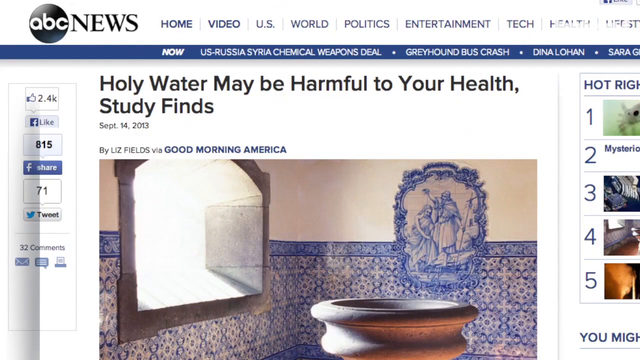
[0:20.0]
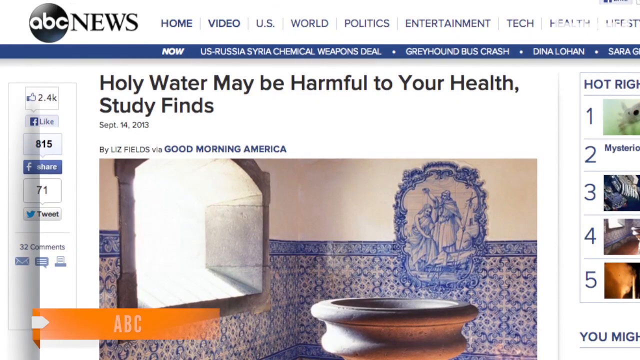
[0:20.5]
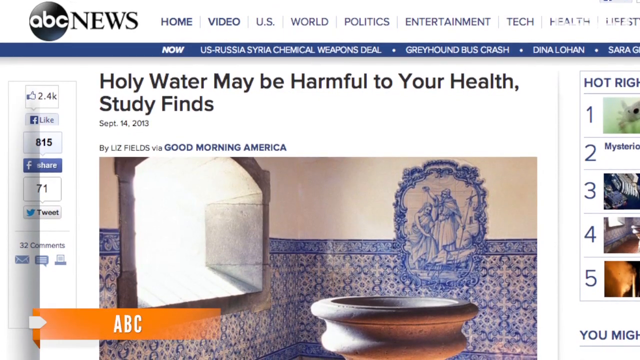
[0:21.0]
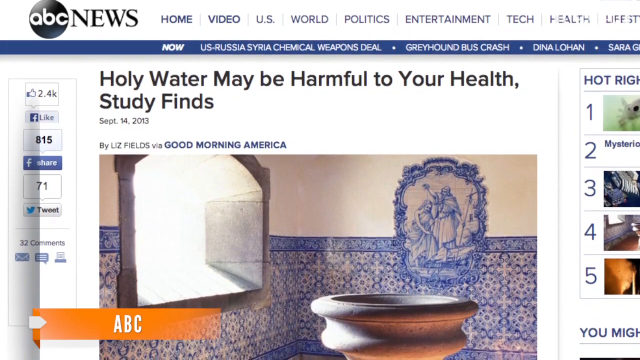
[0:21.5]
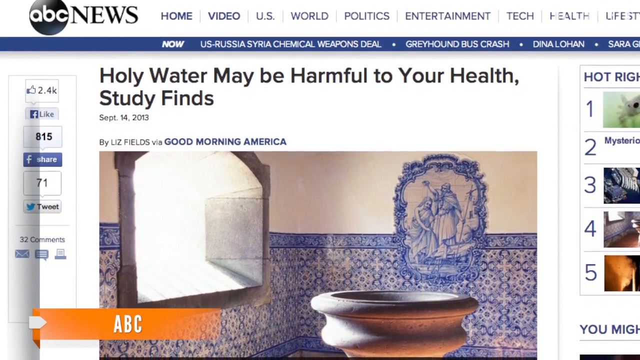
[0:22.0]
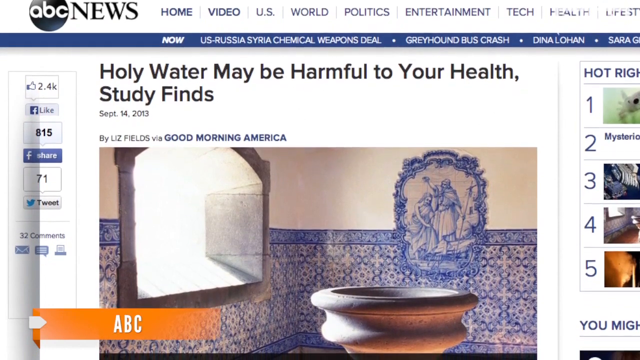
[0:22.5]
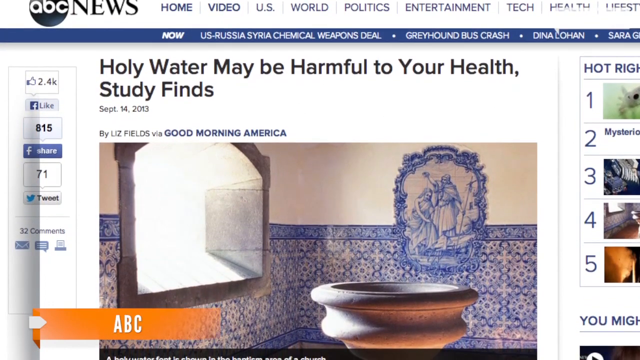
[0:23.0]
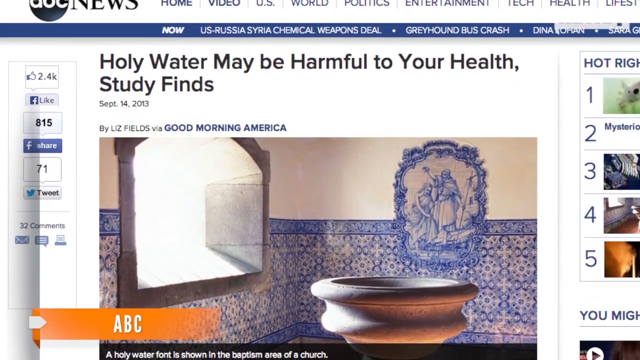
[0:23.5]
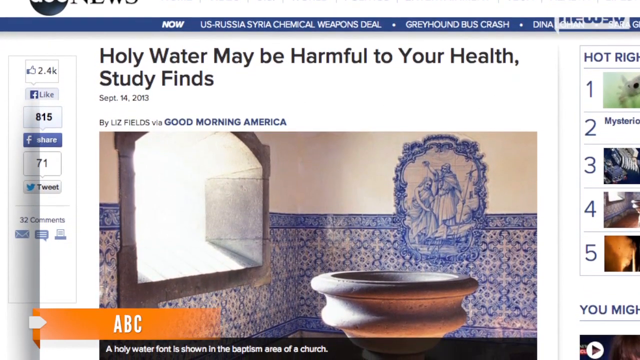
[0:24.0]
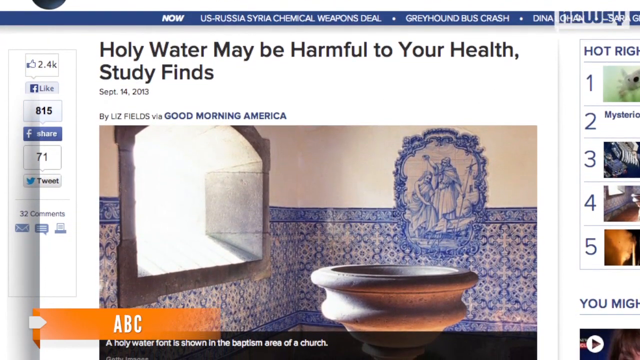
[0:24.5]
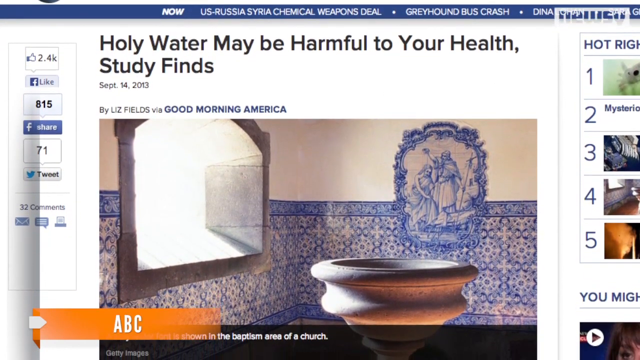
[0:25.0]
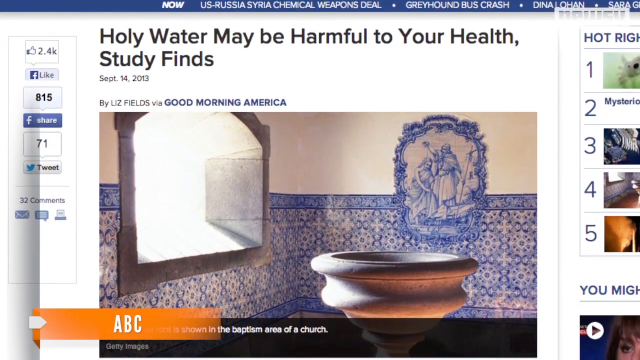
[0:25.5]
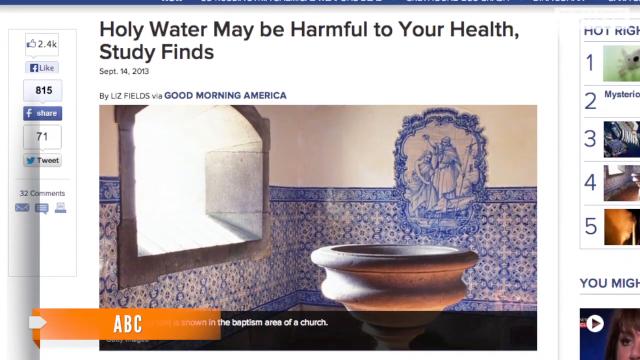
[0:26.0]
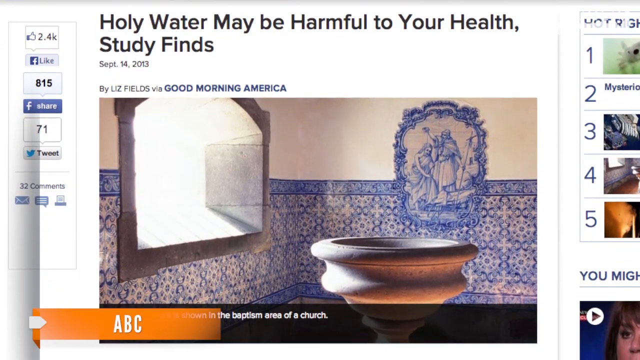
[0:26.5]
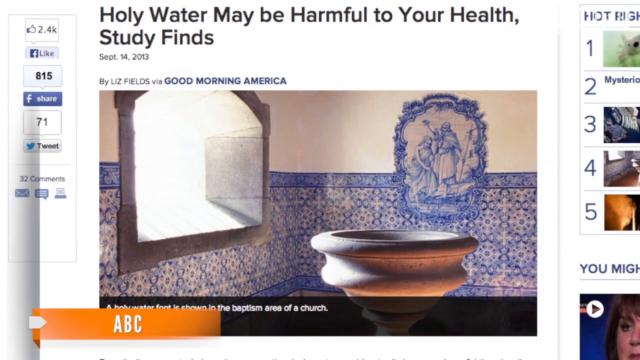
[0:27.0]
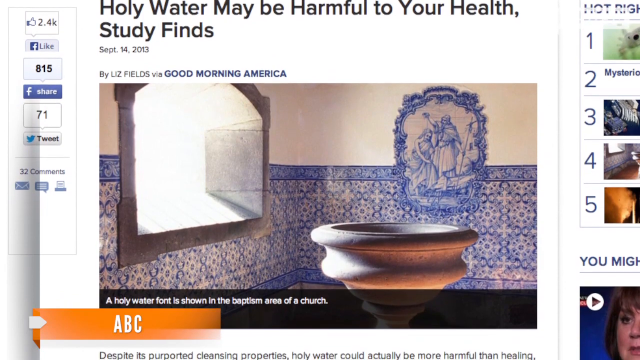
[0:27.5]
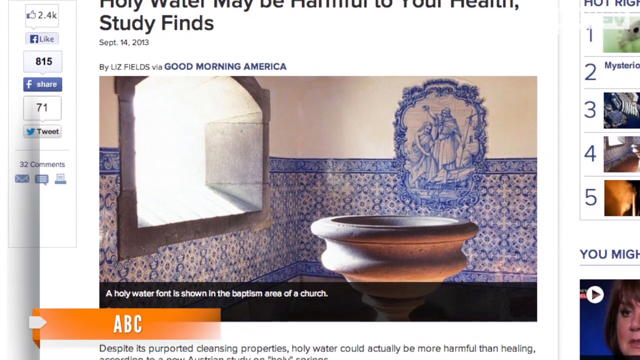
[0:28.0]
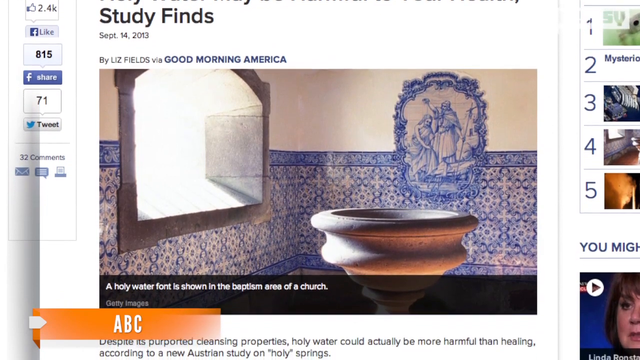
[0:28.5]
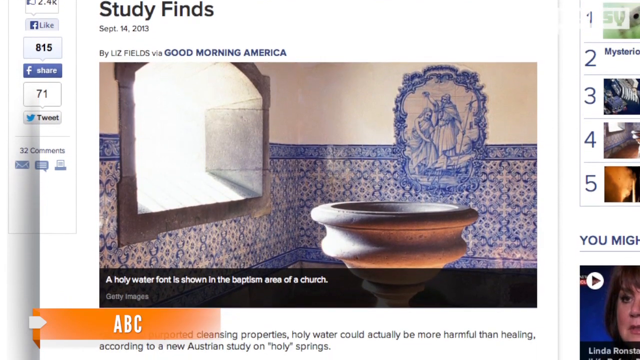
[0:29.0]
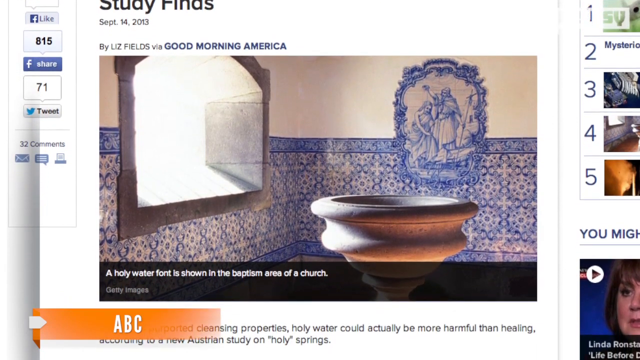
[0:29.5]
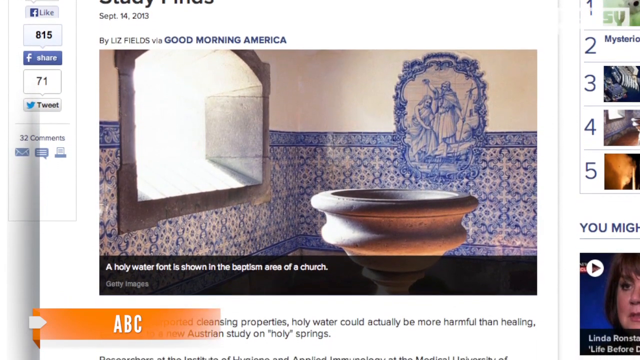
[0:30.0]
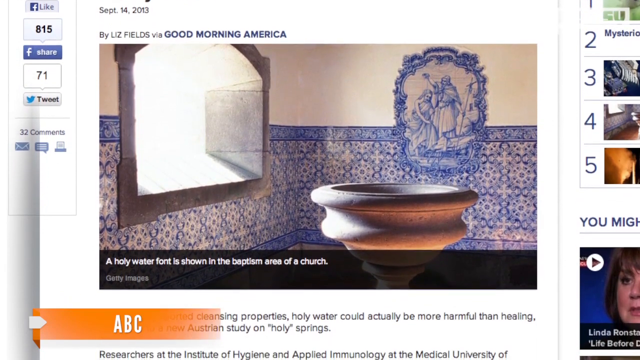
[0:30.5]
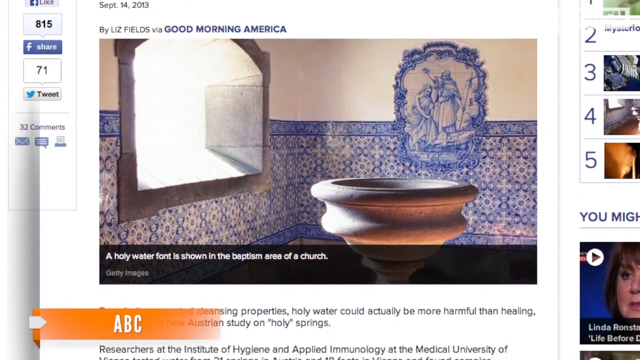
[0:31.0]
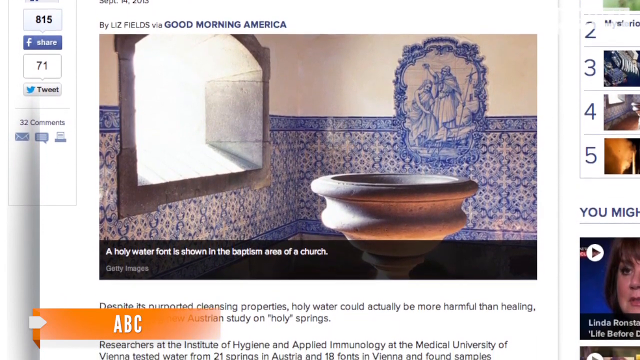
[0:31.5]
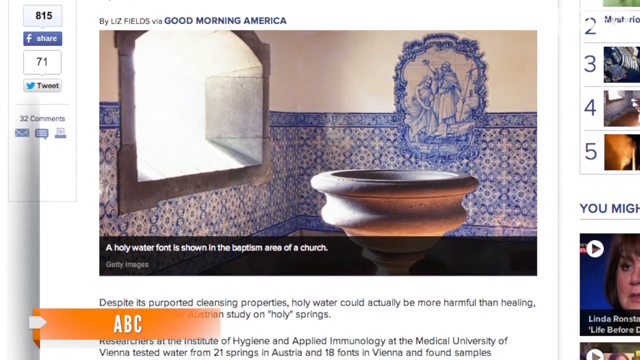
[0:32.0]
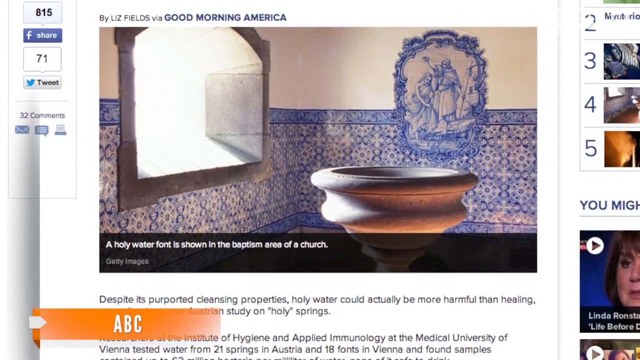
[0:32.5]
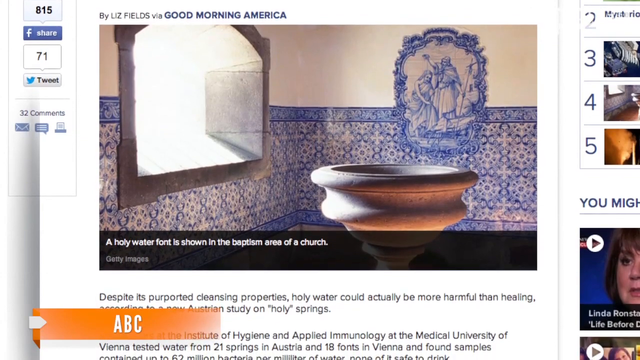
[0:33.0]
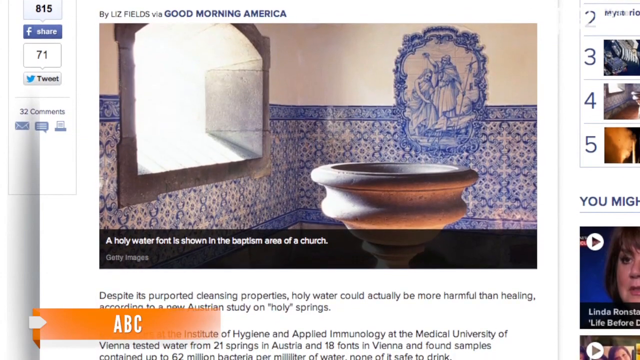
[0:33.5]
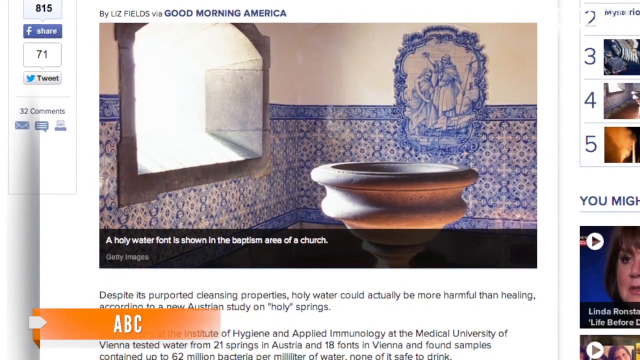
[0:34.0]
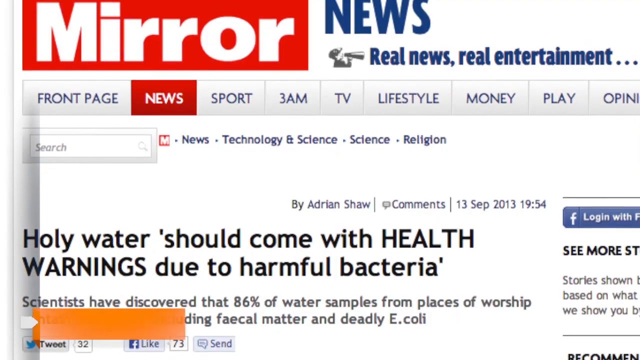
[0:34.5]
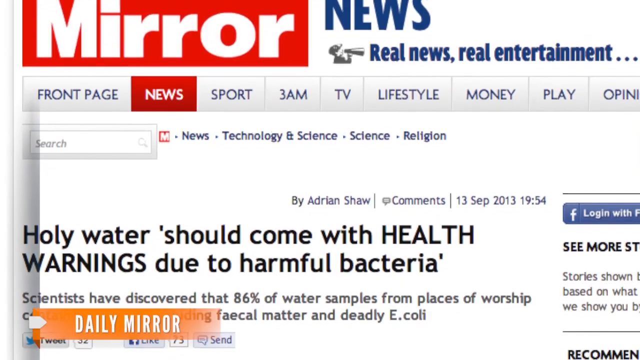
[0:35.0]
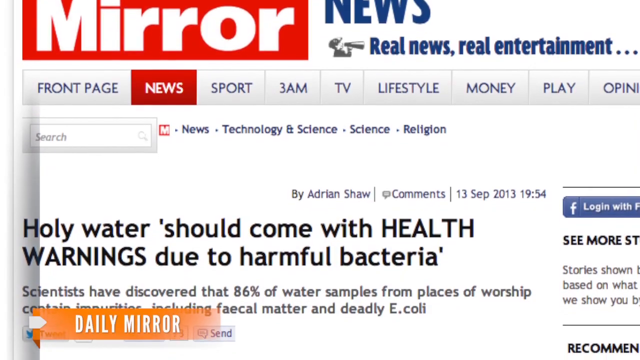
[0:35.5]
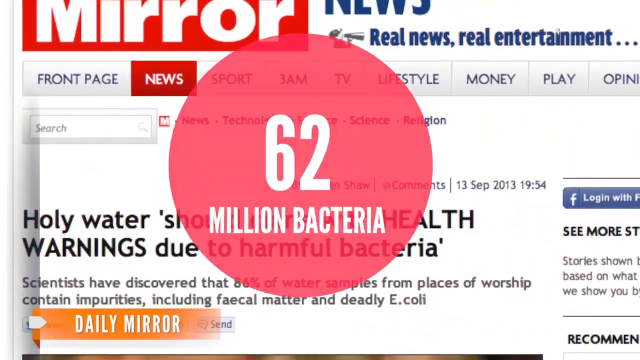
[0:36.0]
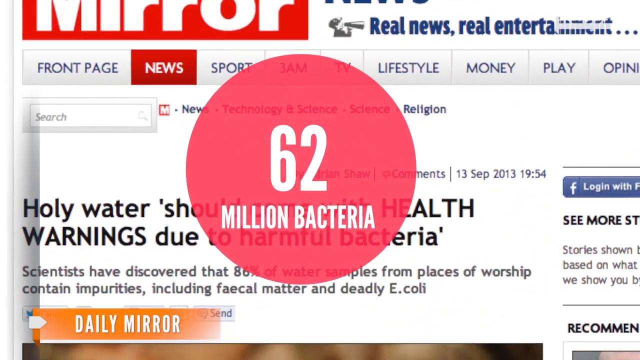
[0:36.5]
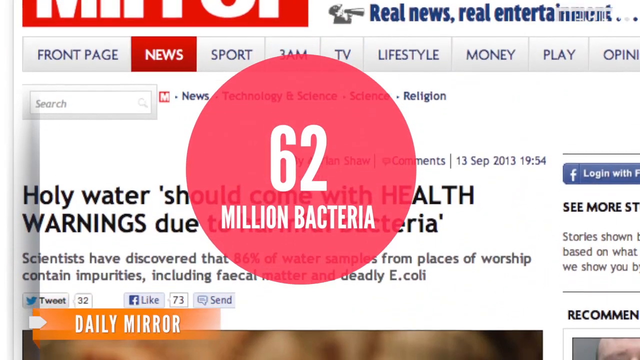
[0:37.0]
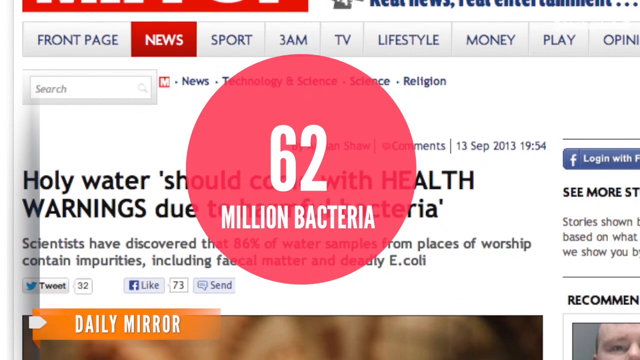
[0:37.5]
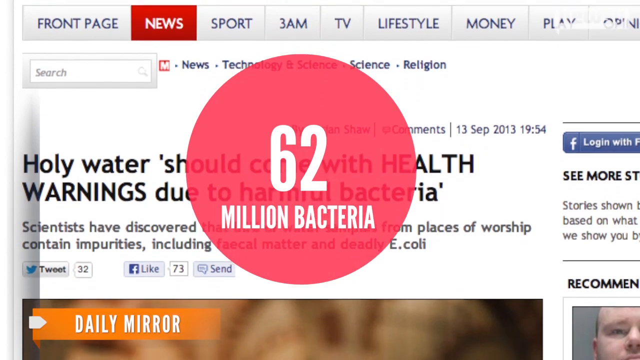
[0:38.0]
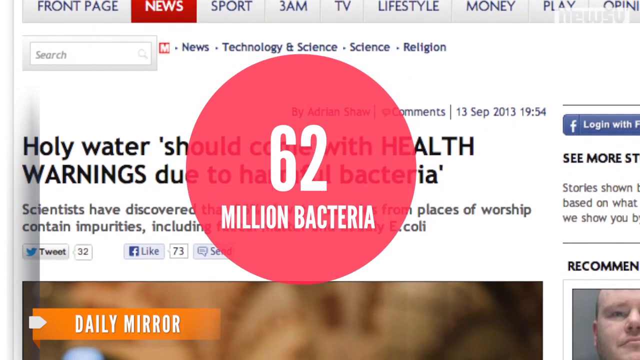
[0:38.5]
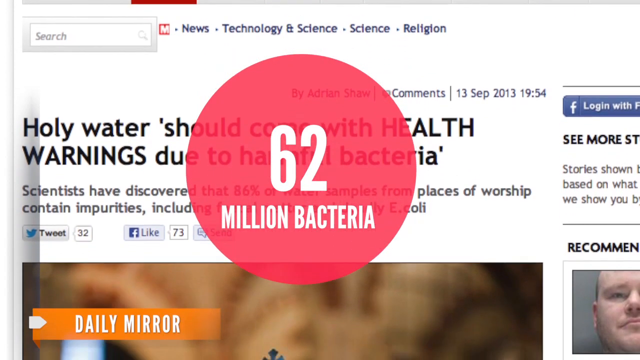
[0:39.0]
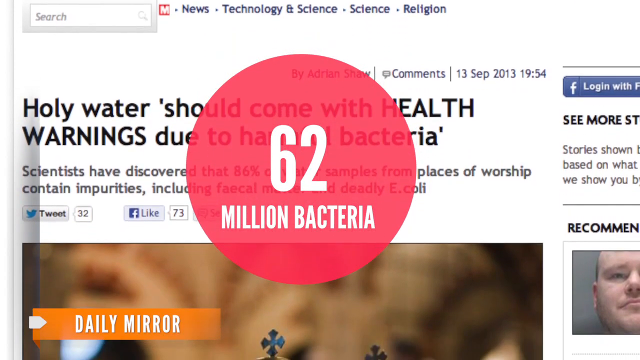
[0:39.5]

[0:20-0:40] An ABC News internet article appears, titled "Holy water may be harmful to your health, study finds," dated September 14, 2013, by Liz Fields via Good Morning America, with a photo of a holy water holder. Another article from Mirror News follows, reading "Holy water should come with health warnings due to harmful bacteria," followed by large text stating "62 million bacteria." The articles from ABC and the Daily Mirror concern bacteria problems in holy water.